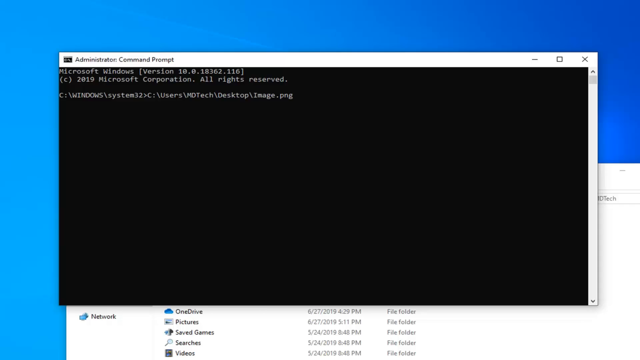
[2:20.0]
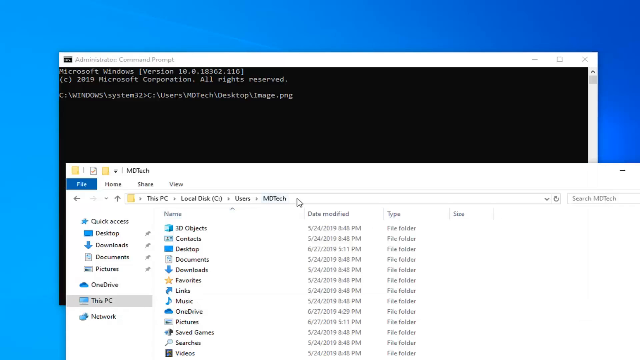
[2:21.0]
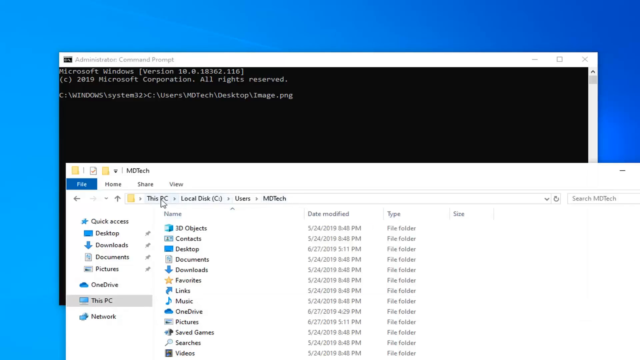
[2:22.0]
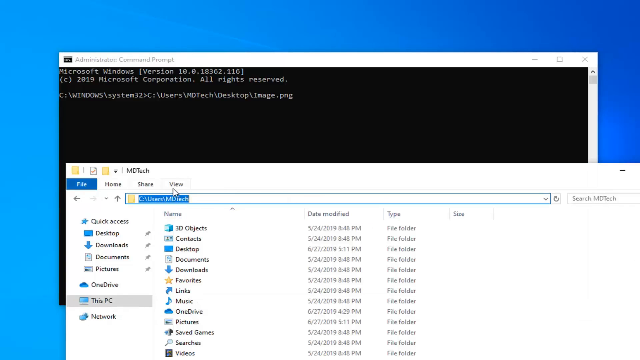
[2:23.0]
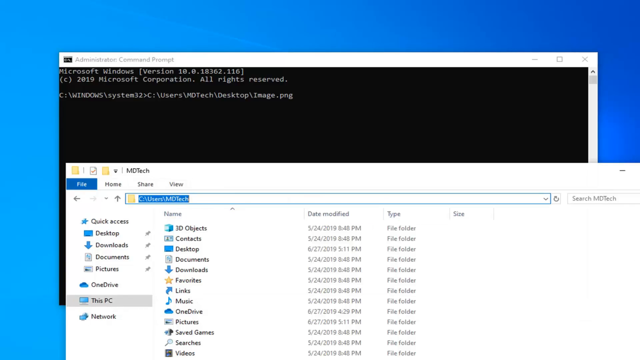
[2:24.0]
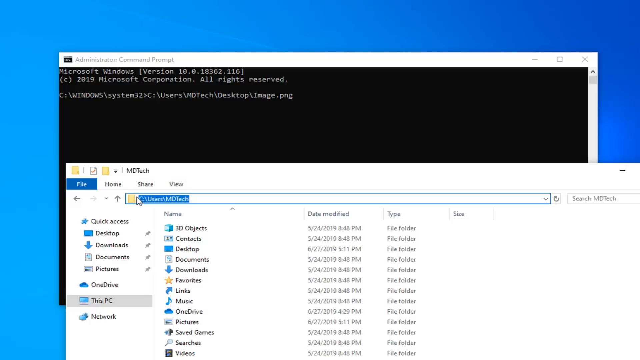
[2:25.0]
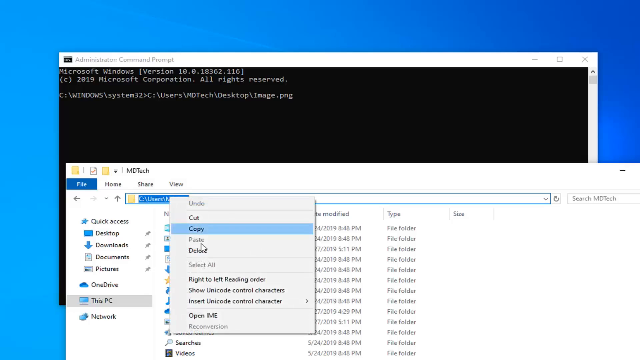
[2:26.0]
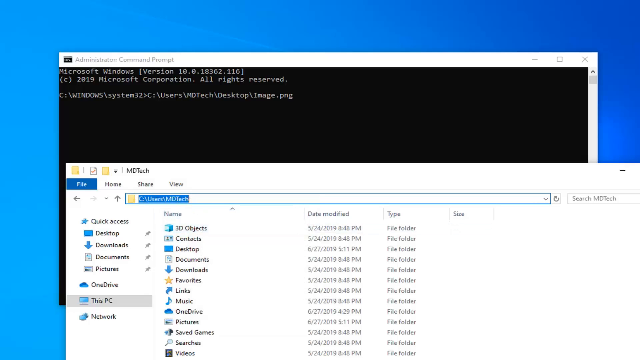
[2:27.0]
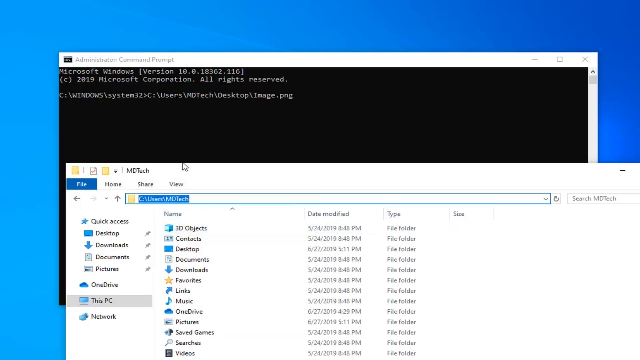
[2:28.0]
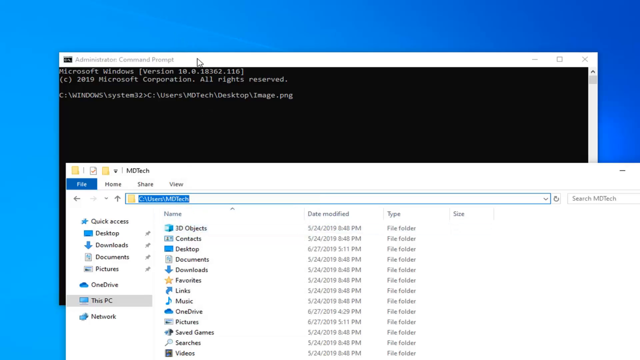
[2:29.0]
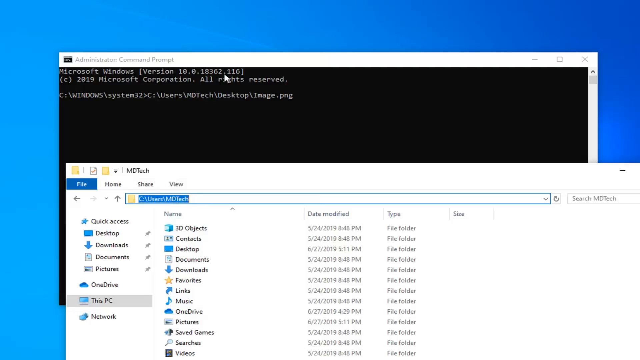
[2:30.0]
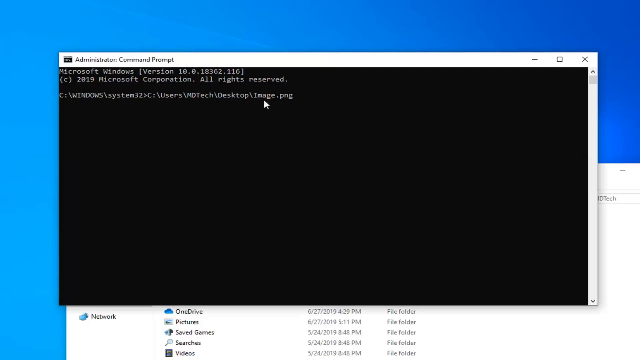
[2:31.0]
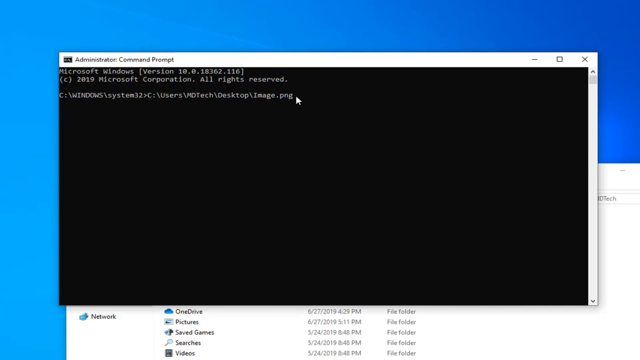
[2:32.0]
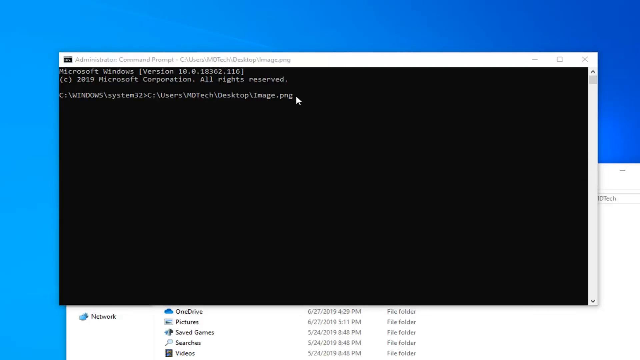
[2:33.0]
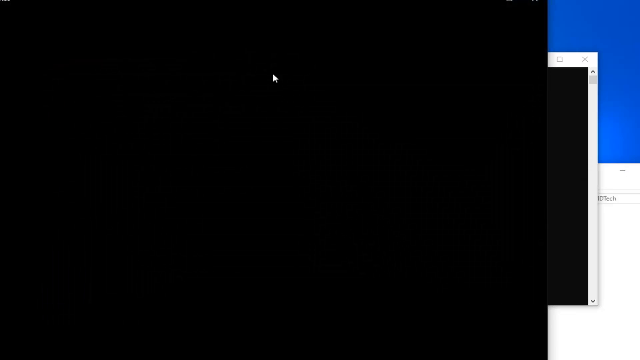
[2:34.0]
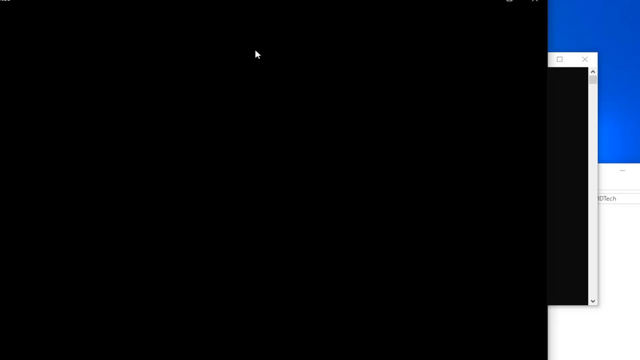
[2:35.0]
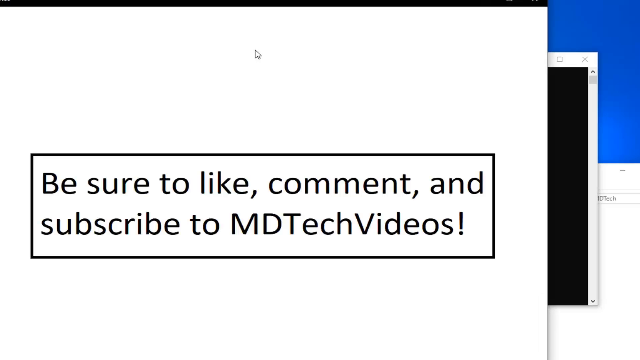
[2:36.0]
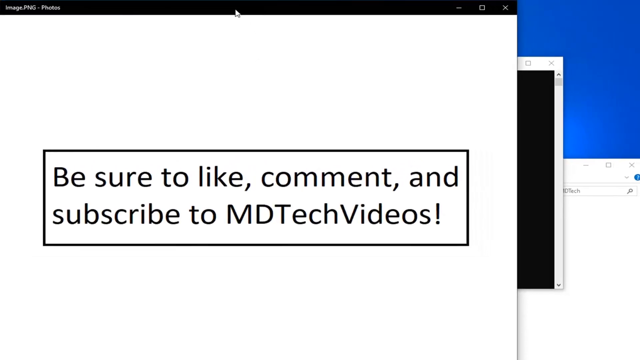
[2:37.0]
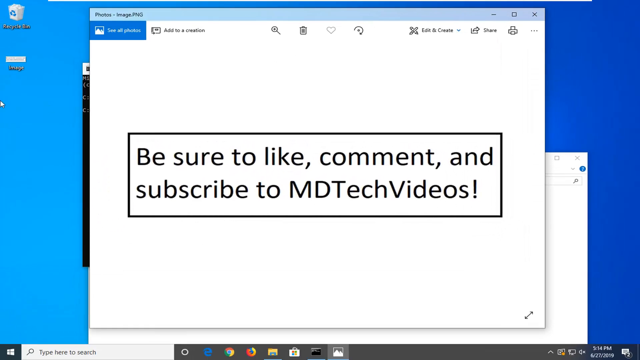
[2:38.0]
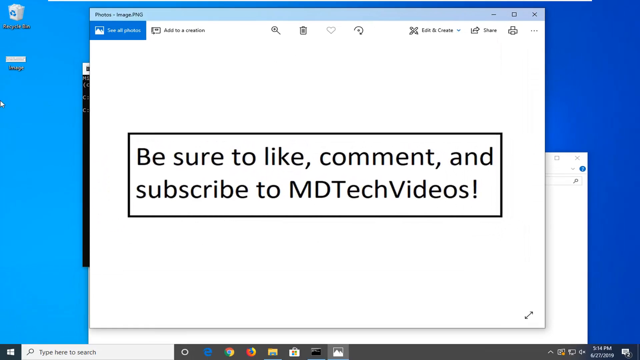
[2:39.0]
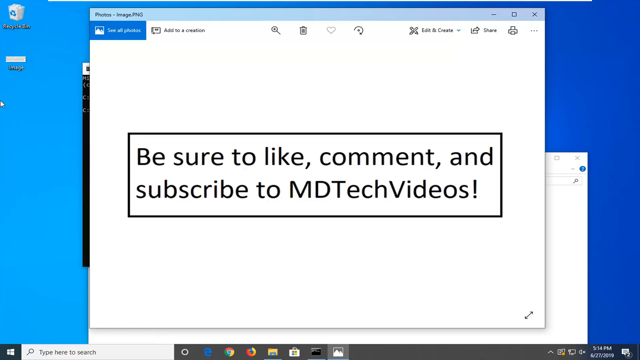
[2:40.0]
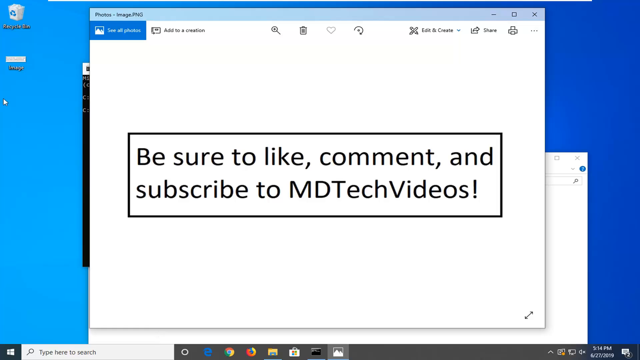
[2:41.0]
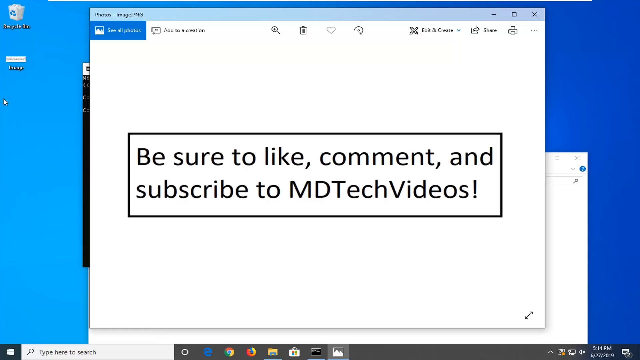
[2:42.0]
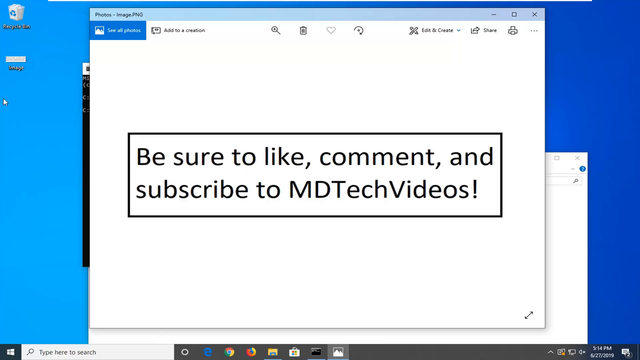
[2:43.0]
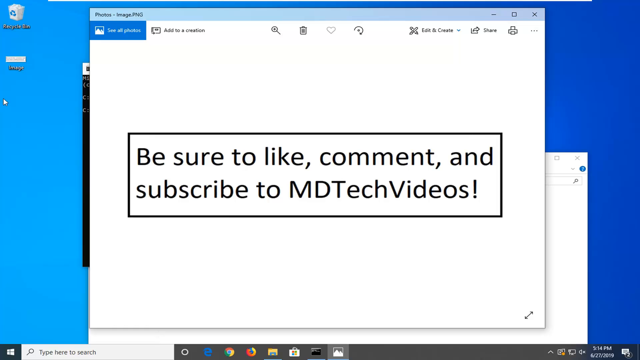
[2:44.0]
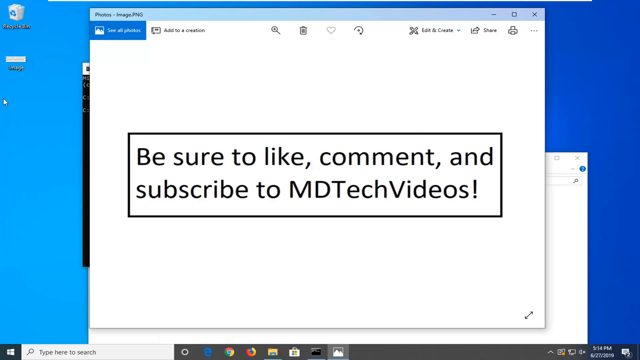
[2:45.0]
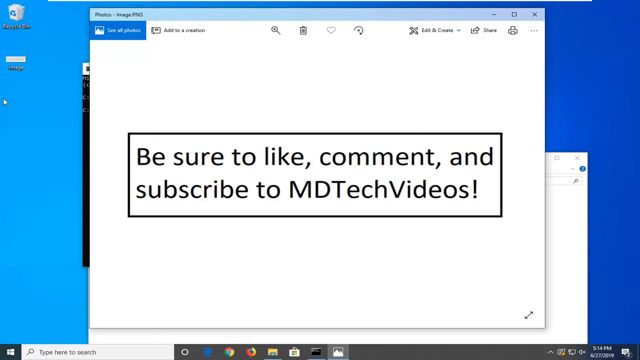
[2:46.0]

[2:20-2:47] The Administrator Command Prompt is a black screen reading "Microsoft Windows version 10.0" and "C (2019), Microsoft Corporation, all rights reserved", followed by the command "C:\Windows\system 32 C\users\MD Tech\desktop\image.PNG". The file is viewed under users, MD Tech, and copied, and he appears to paste it into the command prompt from earlier. An end screen reads "we're at the end of the video. Be sure to like, comment, subscribe to MD Tech videos."